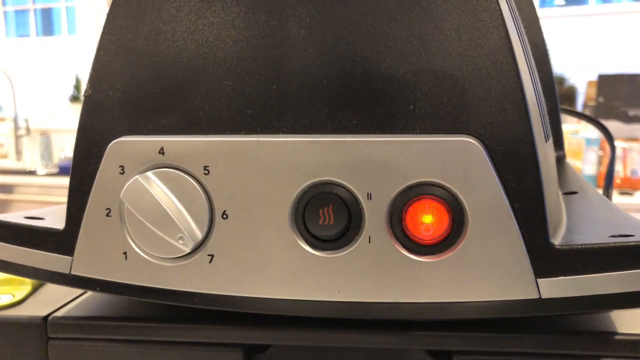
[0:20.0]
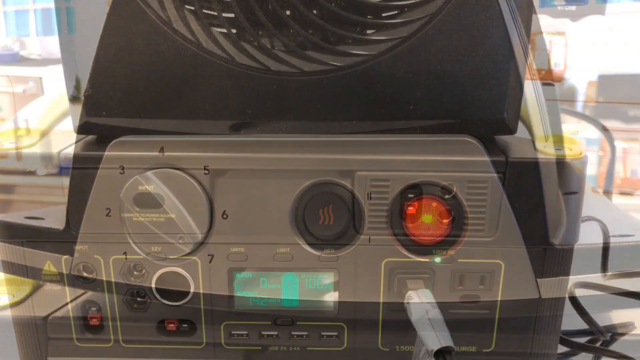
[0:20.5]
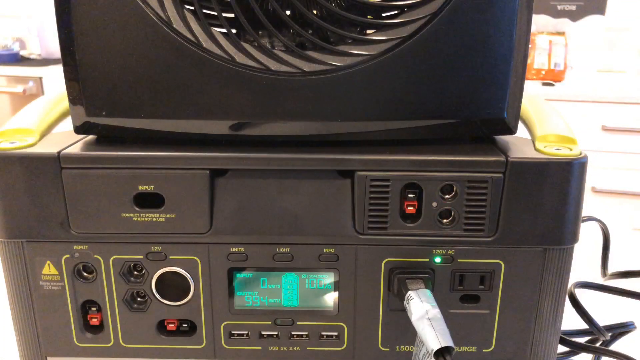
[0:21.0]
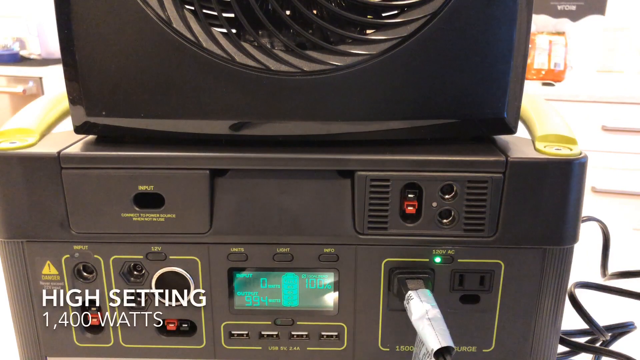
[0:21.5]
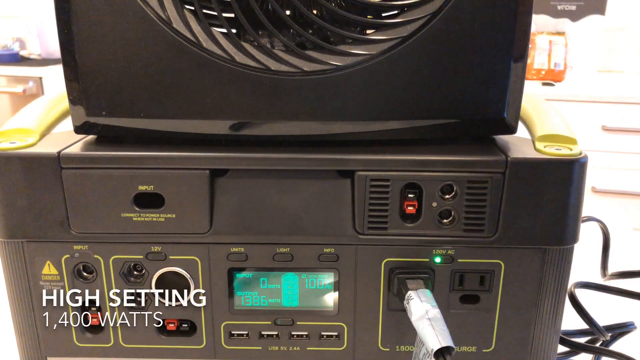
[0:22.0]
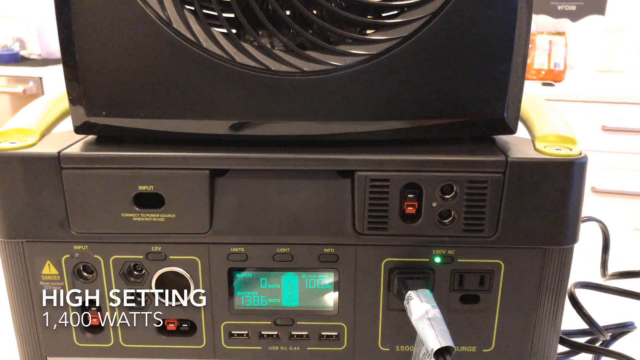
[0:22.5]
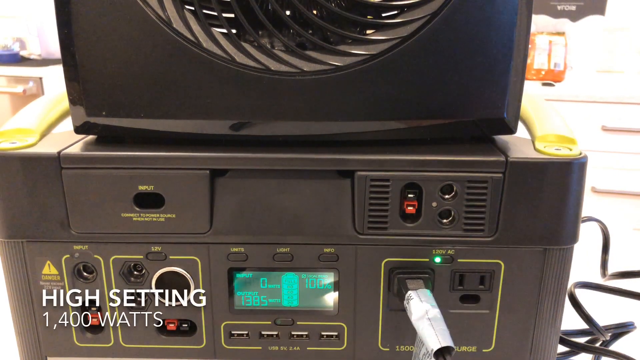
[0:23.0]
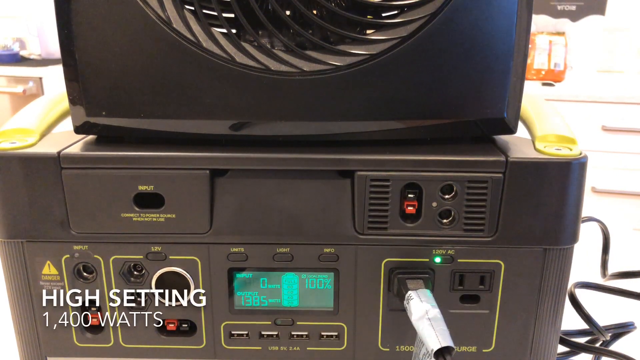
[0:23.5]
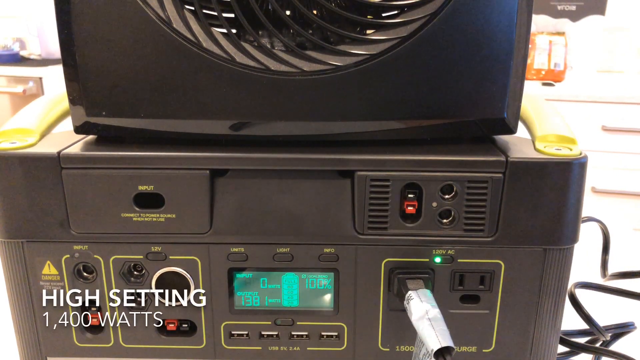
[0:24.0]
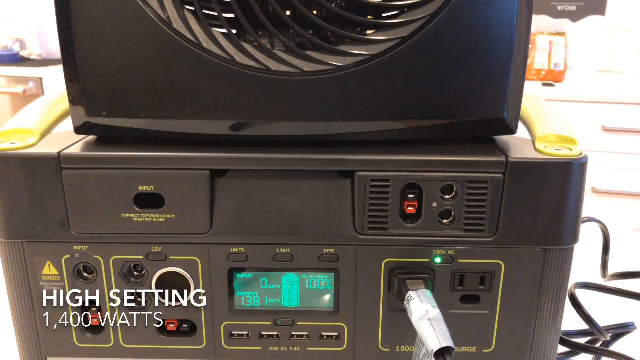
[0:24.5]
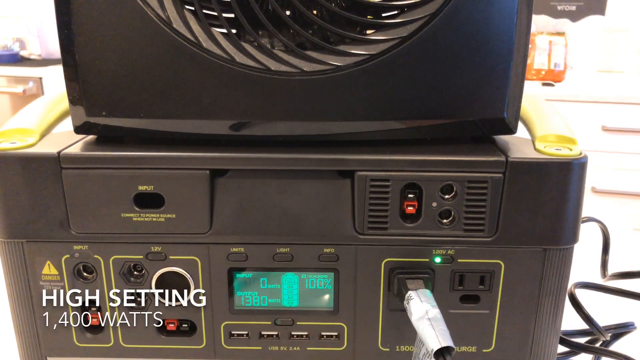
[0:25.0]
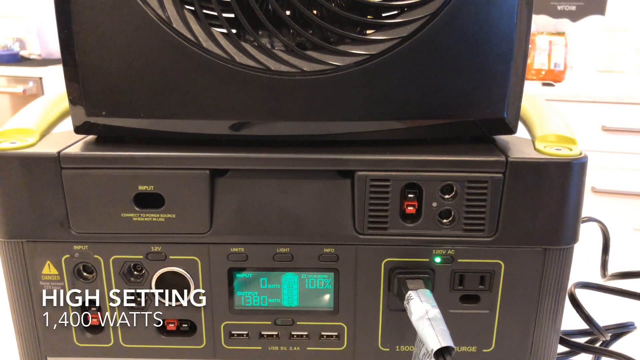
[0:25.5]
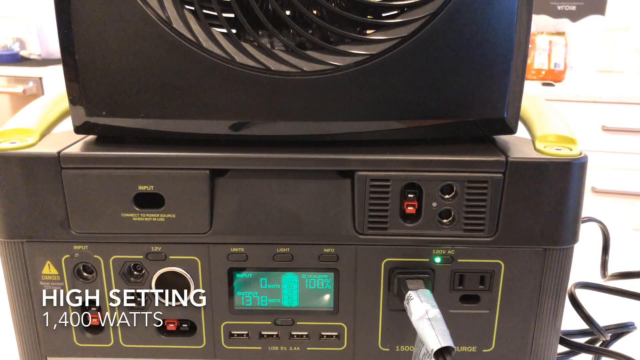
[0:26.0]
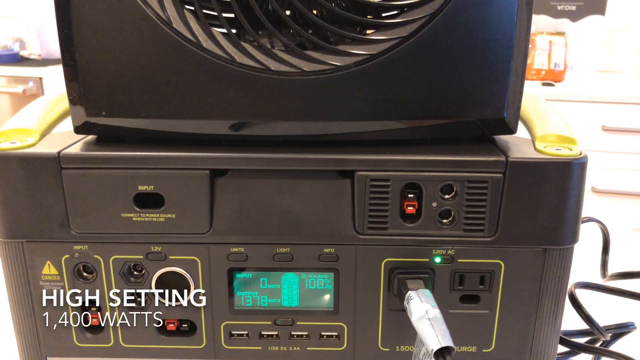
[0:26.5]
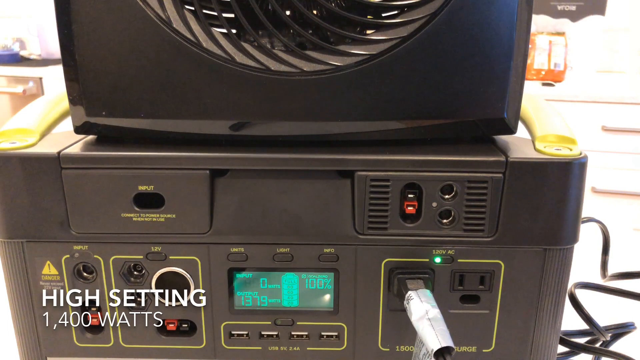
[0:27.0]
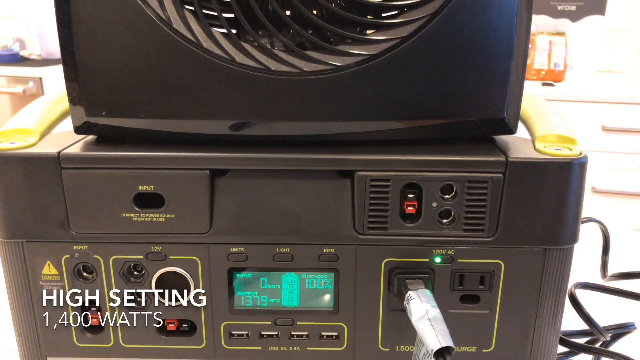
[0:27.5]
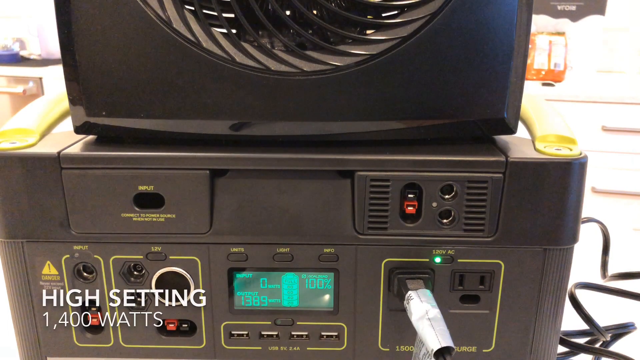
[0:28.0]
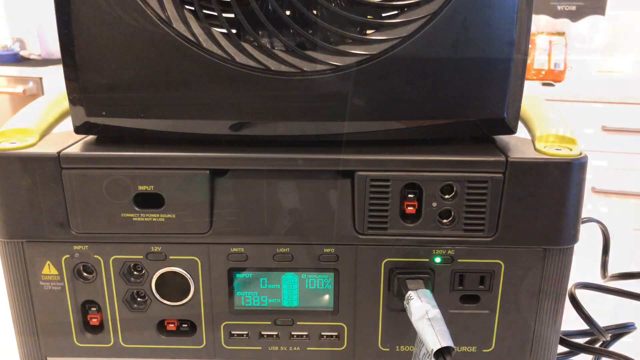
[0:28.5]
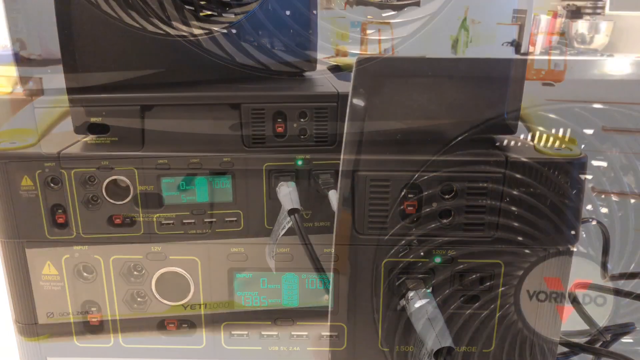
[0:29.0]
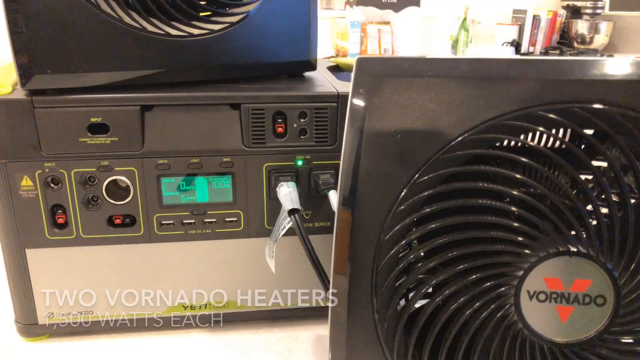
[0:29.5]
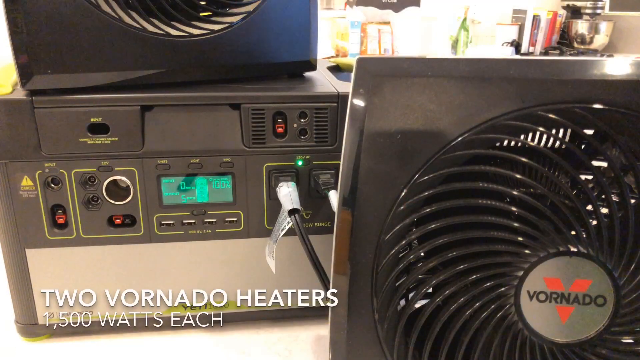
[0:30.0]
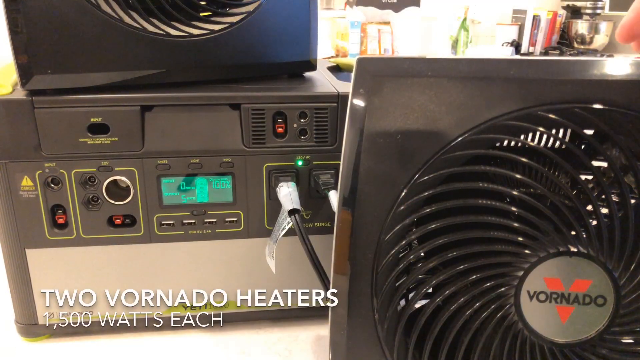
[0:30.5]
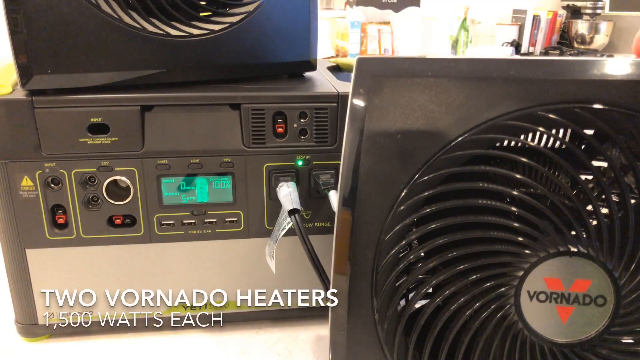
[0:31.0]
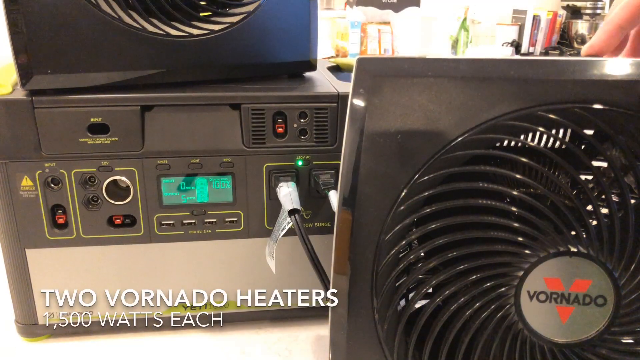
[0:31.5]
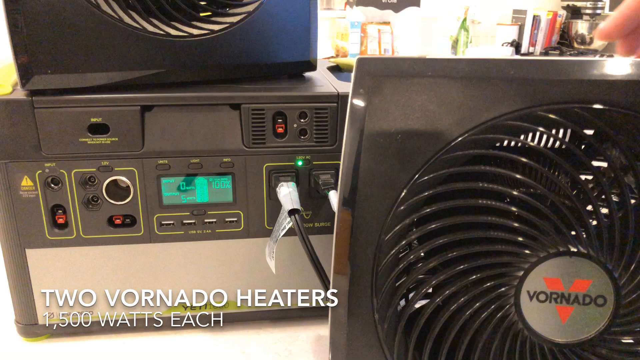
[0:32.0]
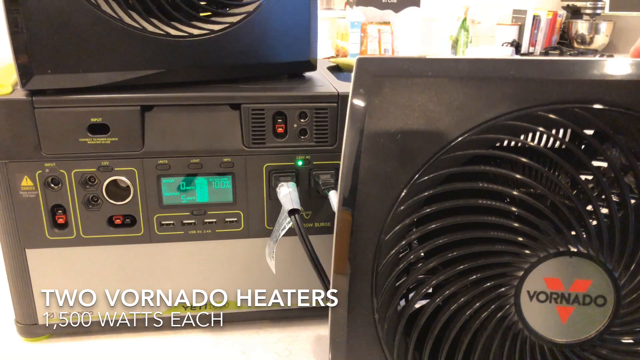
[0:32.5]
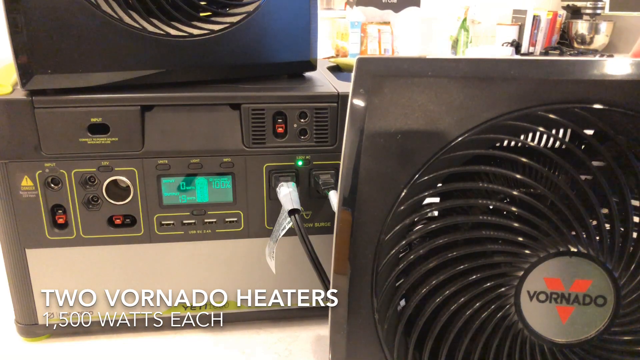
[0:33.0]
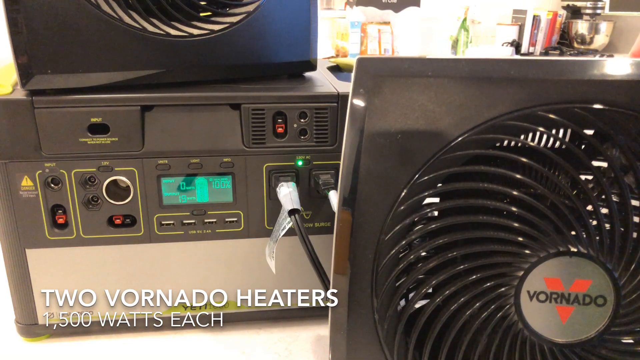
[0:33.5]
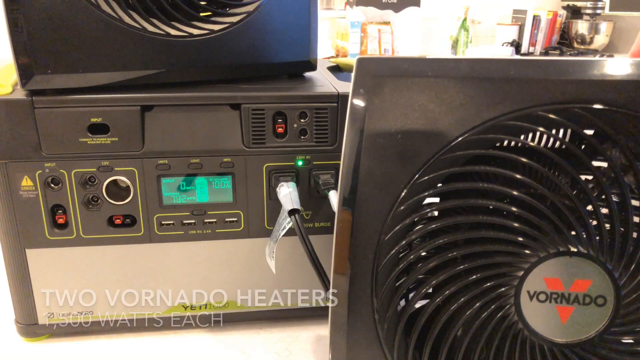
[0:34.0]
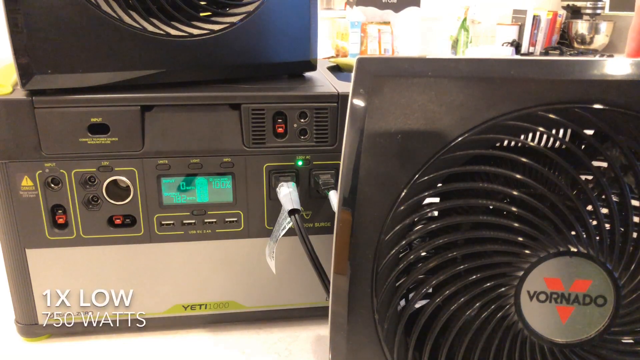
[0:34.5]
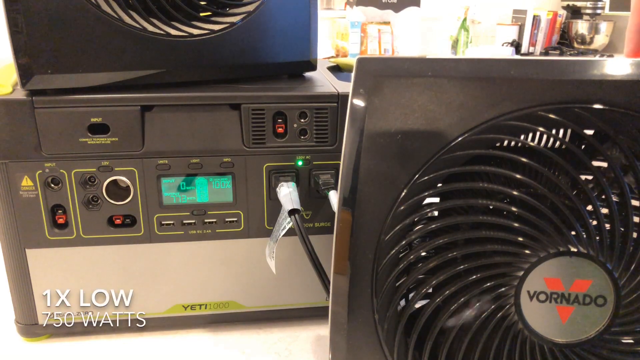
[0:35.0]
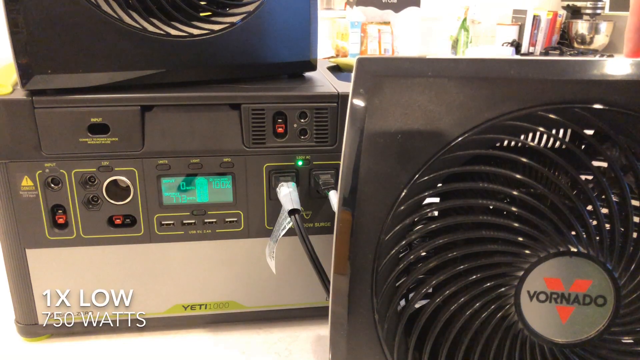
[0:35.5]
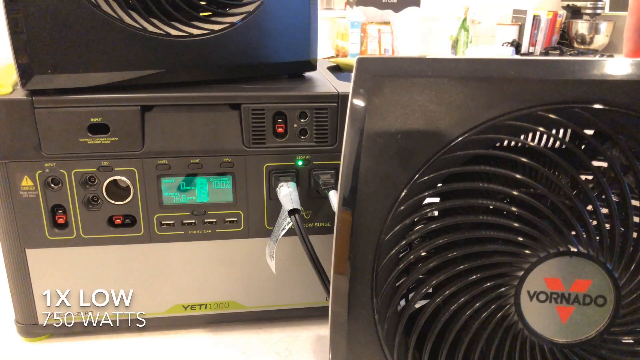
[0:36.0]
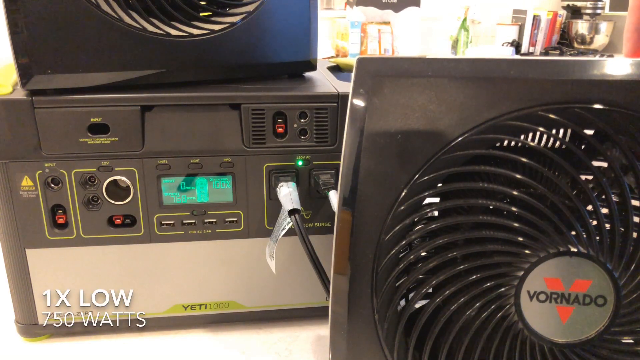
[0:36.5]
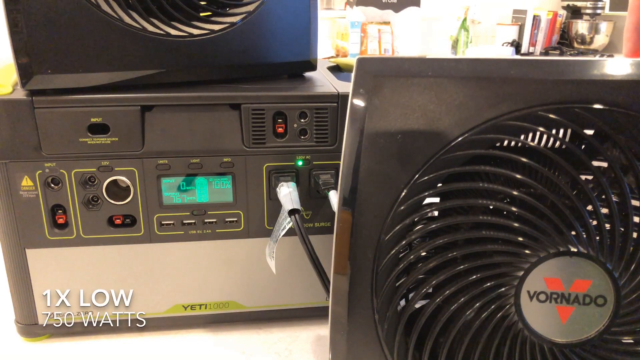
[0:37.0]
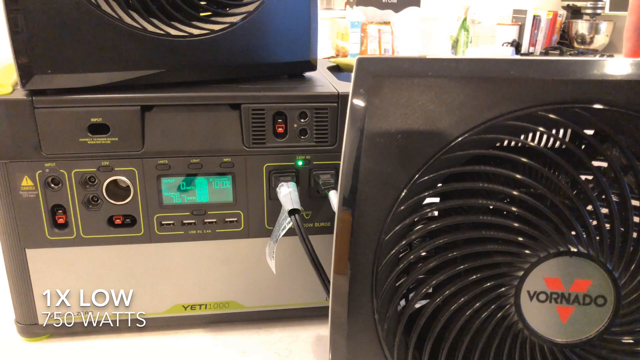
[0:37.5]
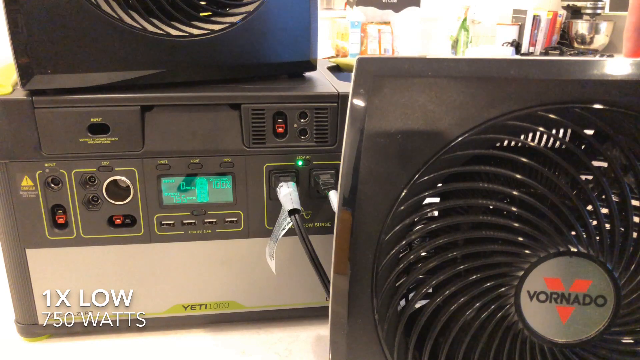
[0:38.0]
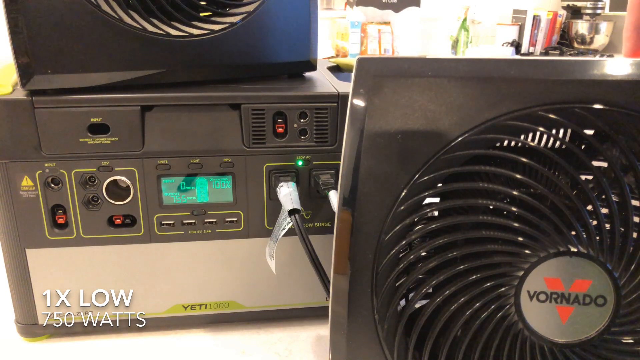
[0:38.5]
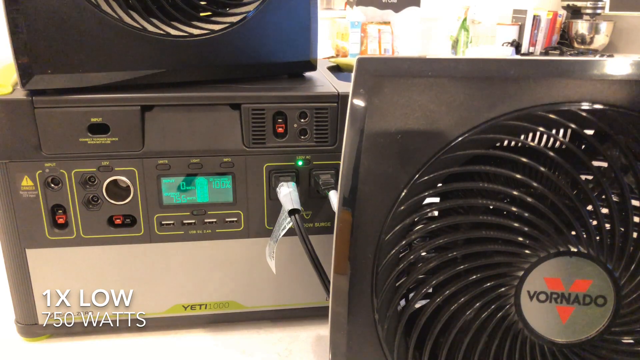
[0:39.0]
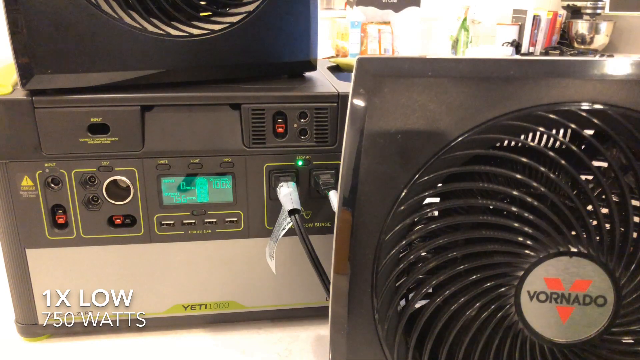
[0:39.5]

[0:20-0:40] A Verano space heater is now on a high setting, 1,400 watts. The heater is plugged into the back of a receiver and is sitting on top of the receiver. Text reads "1 times low watts", which is 750 watts. The heater is set to 7, and there is a red light next to the power button, which has red squiggly lines on it. The shadow of someone setting this up is visible. A right hand reaches over and turns on the Verano heater at the top; only one finger of the hand is visible. The heater is a square with a spinning middle, and once it is on, the middle blades turn.